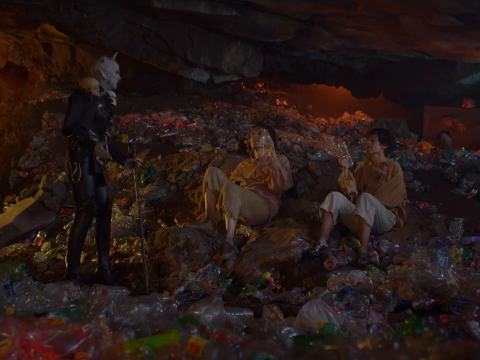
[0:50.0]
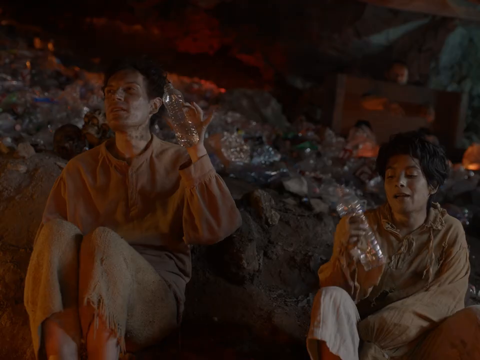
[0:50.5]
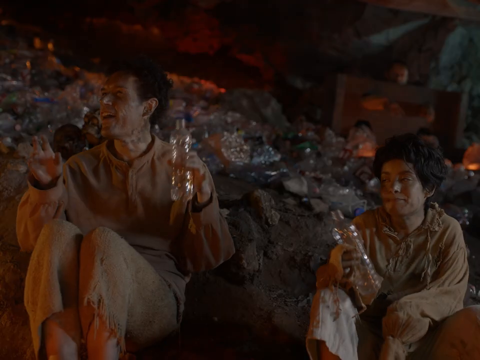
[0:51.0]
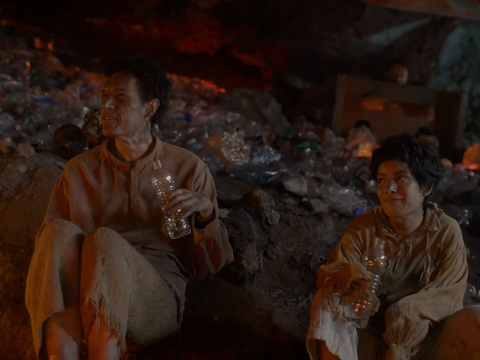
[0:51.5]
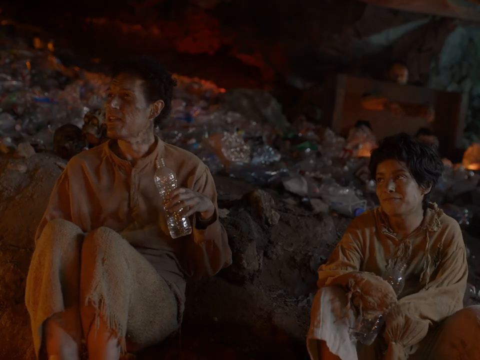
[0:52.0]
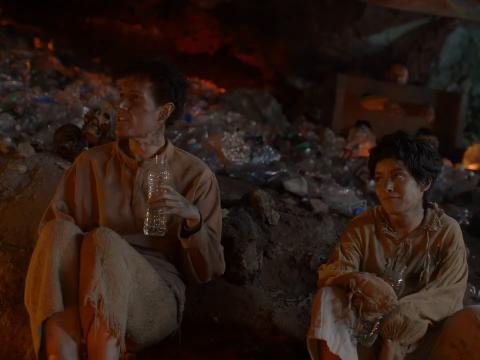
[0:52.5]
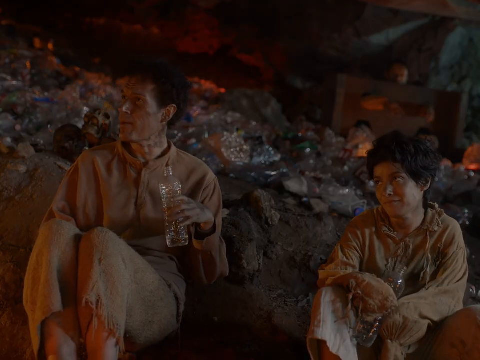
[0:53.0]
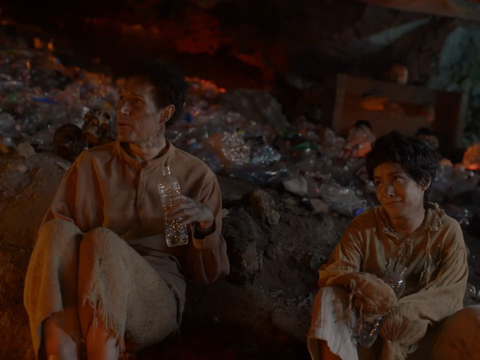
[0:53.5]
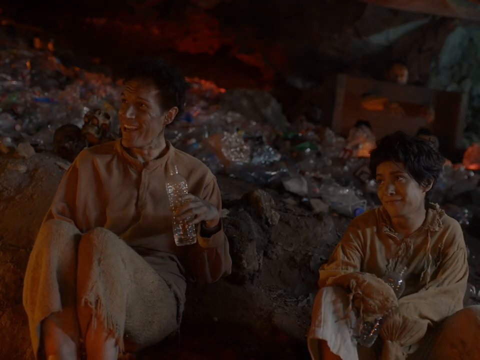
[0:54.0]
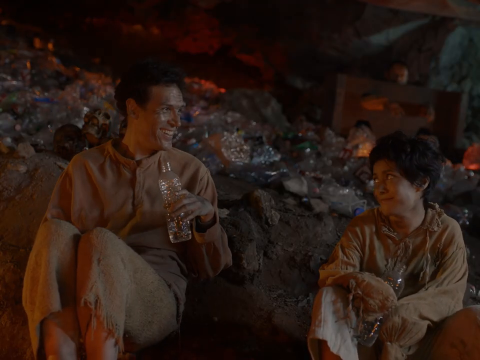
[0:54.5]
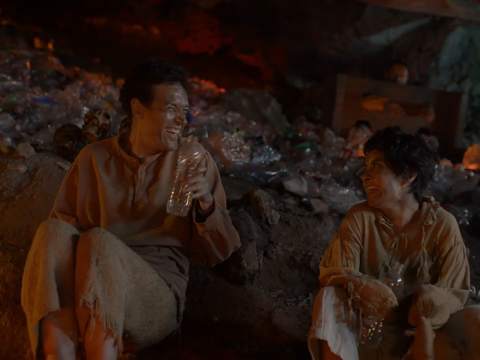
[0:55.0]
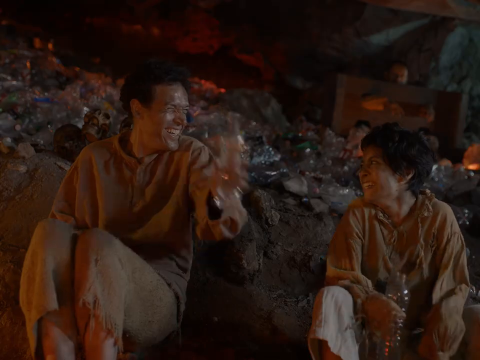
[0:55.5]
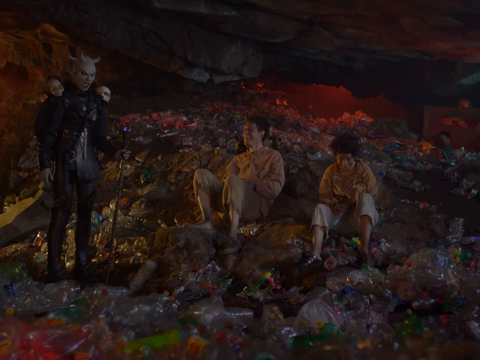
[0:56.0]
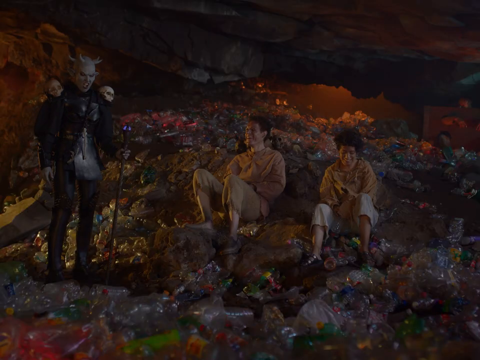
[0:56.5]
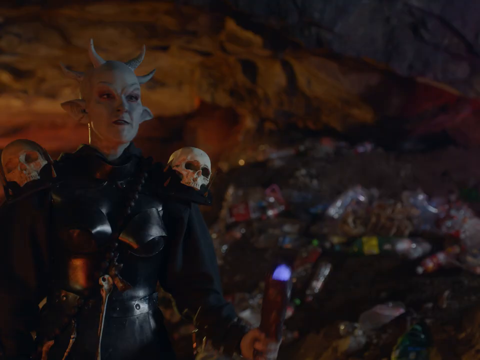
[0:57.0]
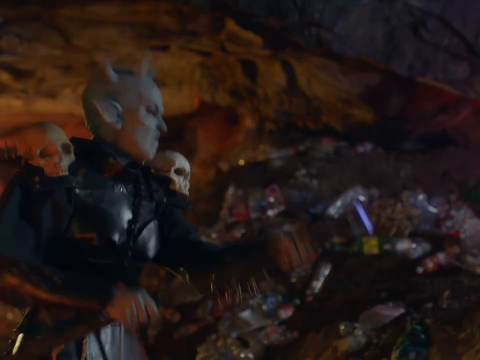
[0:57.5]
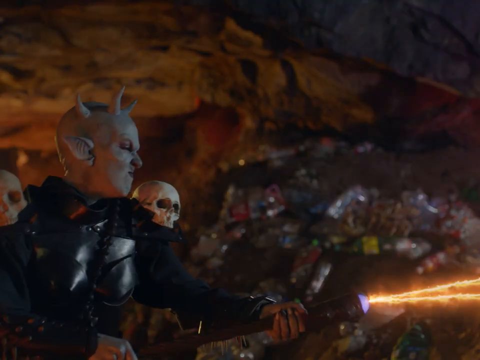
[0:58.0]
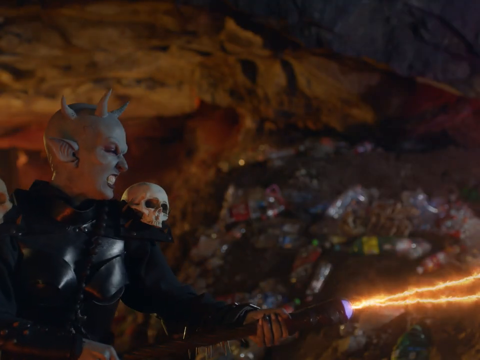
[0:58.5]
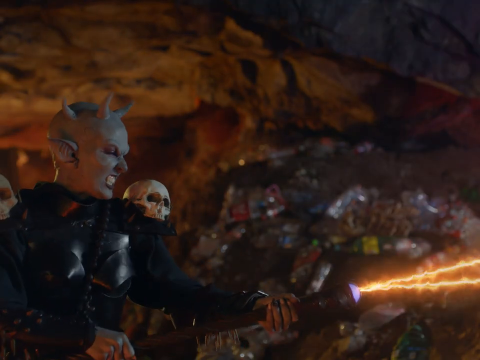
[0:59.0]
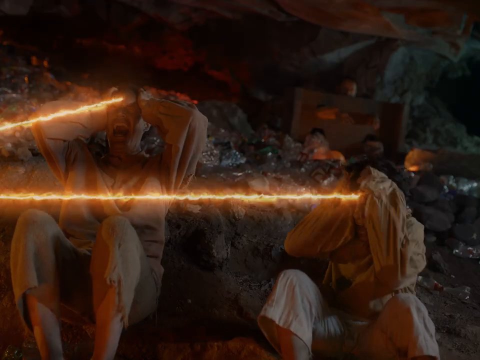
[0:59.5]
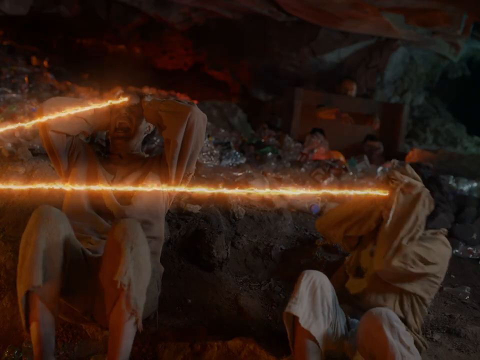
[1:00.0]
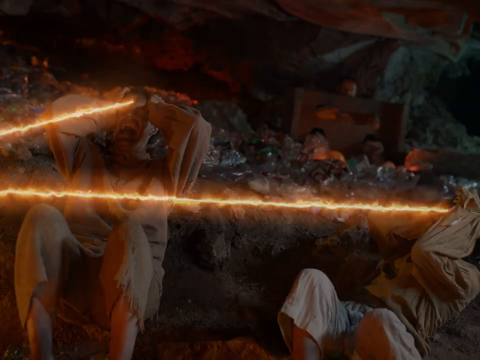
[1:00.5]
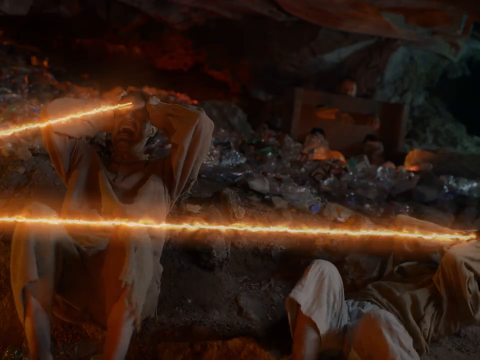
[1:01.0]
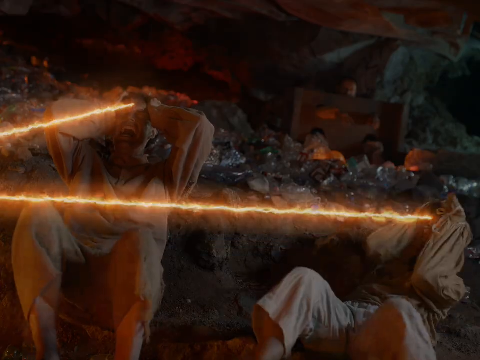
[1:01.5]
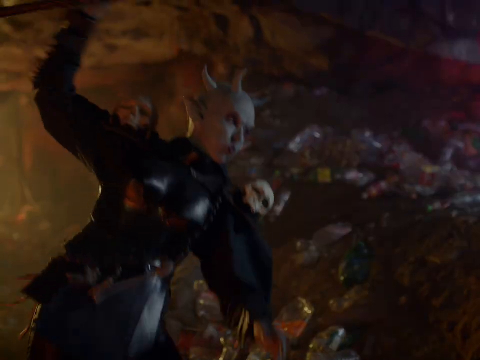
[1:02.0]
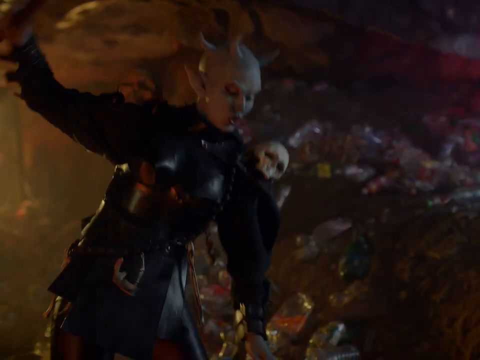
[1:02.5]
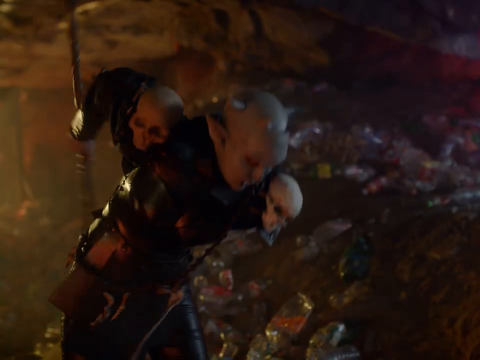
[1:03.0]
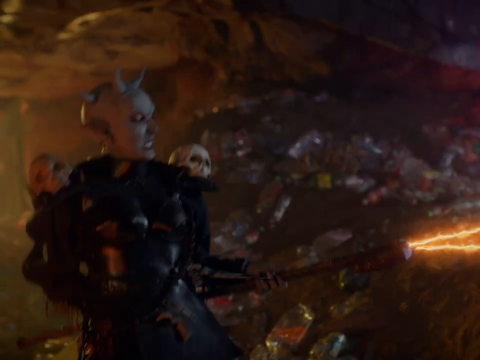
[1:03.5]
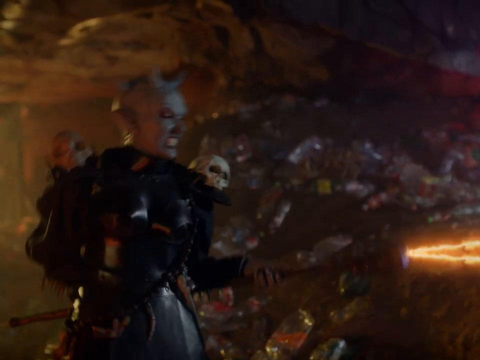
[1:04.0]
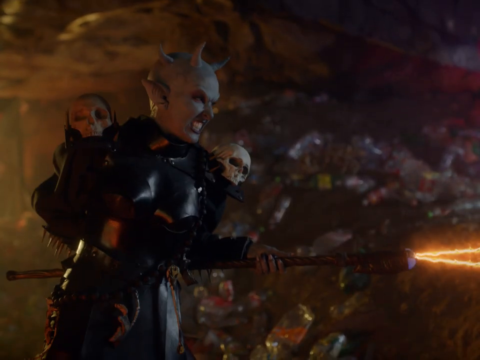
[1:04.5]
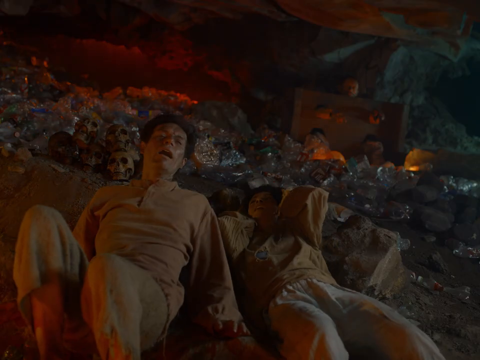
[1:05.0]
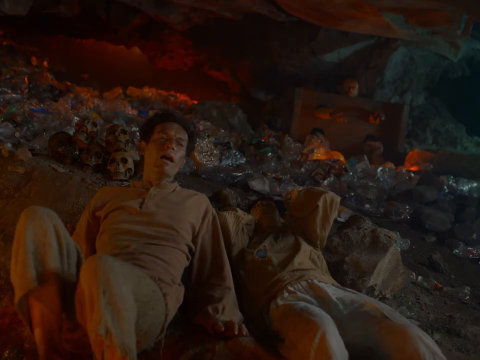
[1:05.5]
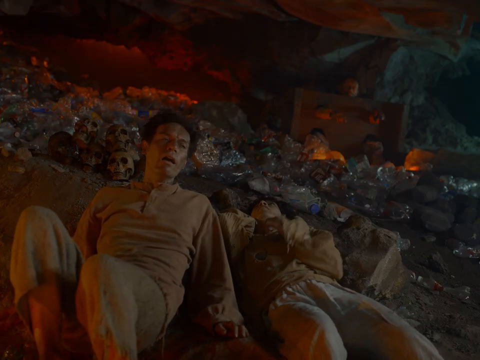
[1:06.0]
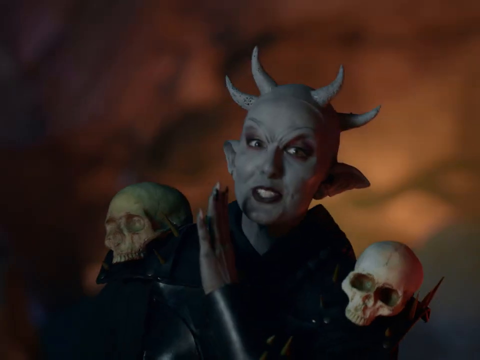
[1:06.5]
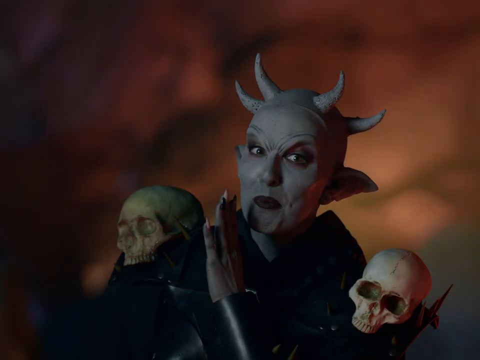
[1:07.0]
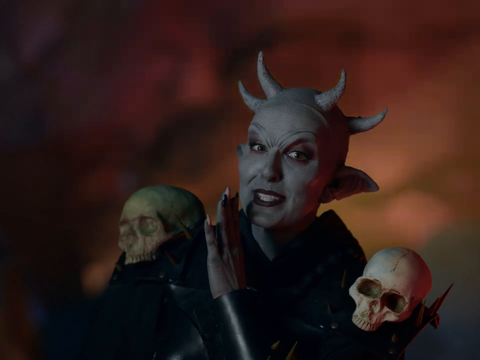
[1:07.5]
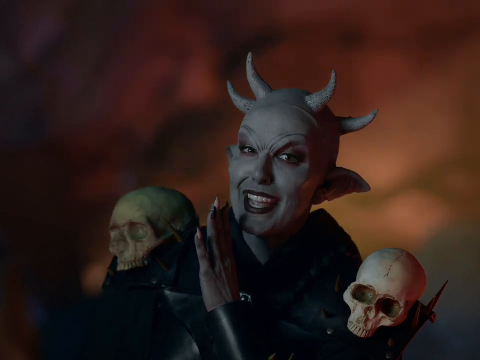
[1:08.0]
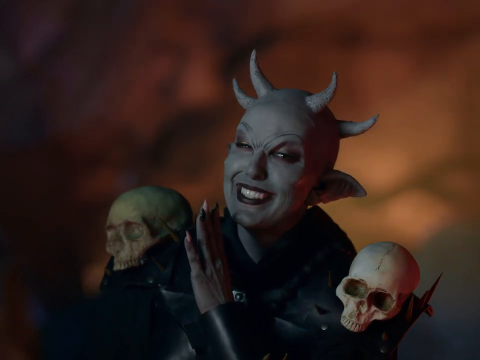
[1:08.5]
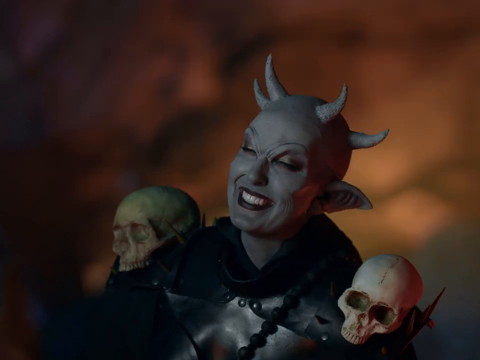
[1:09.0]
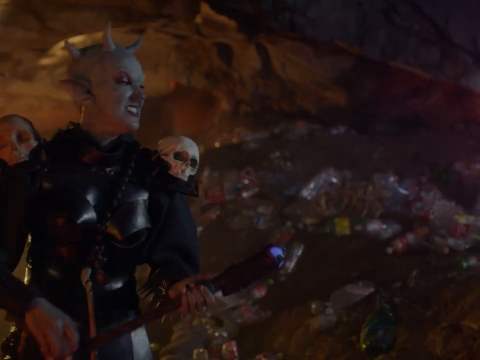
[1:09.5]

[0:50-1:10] The two people are still on the ground, now holding plastic bottles, one in his right hand and the other in his left hand. They are sort of sitting and lying on the ground, their knees bent, leaning back a little, facing the alien creature, who holds a staff of some kind. They talk and laugh, and after laughing at the alien, they throw the plastic bottles forward into the cave. The alien picks up the staff and shoots what looks like electricity bolts at each of their foreheads; it looks like it is burning them or burning their brains. The alien swings the staff around, shooting them with the staff in front of its body, then swinging it around its back and shooting them again. A close-up then shows the alien leaning forward and sort of side-glancing at the camera with the back of a hand lifted to the side of its mouth, sort of whispering something at the viewer and laughing.